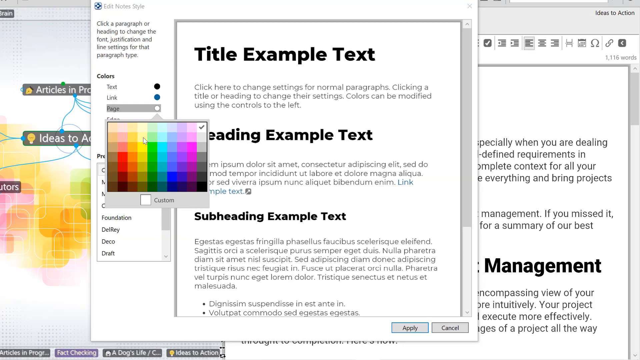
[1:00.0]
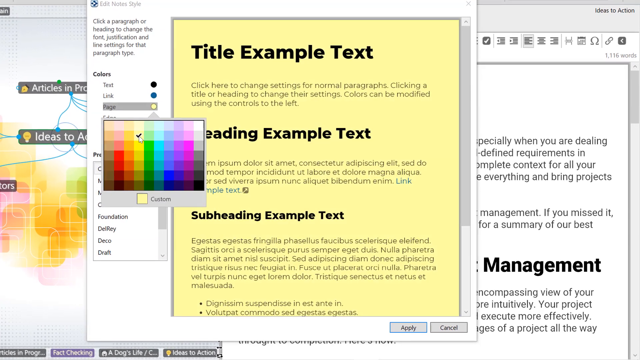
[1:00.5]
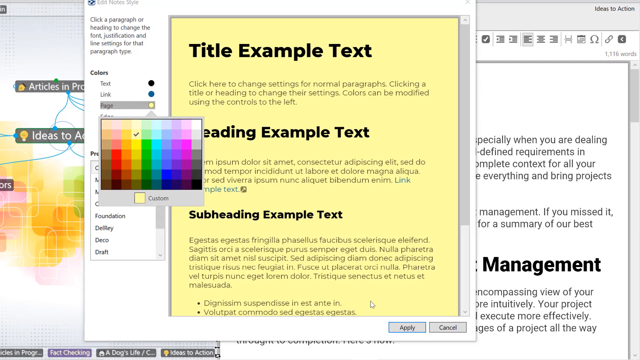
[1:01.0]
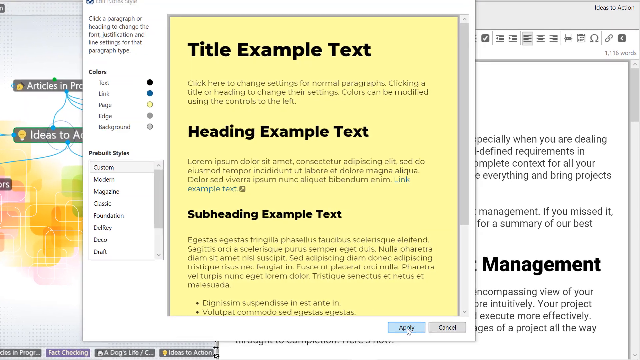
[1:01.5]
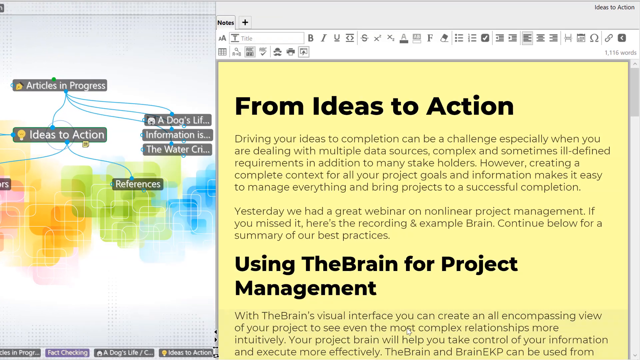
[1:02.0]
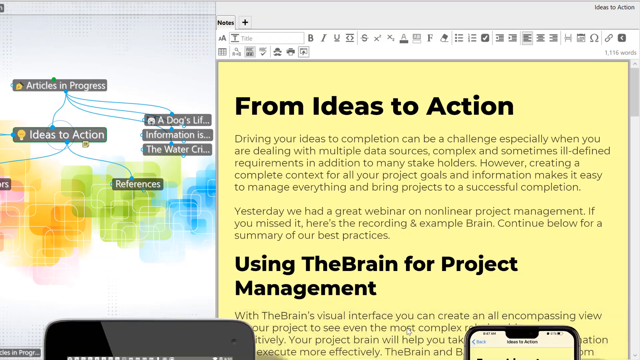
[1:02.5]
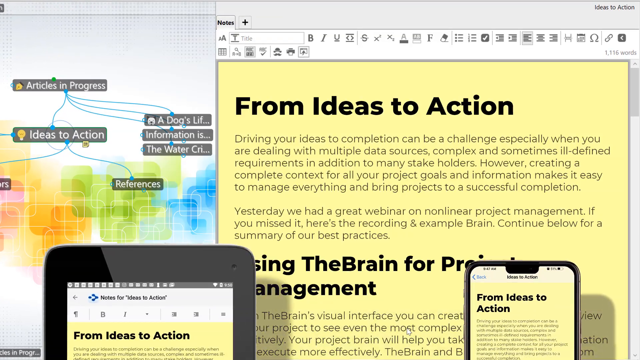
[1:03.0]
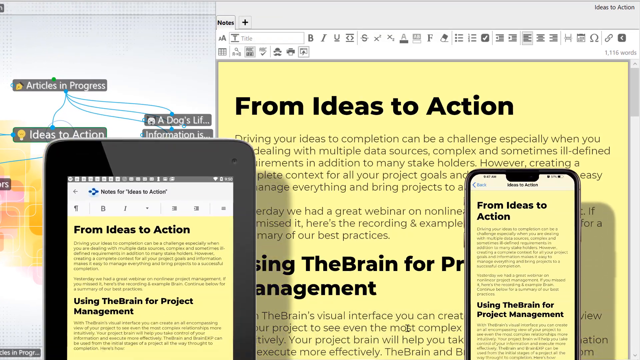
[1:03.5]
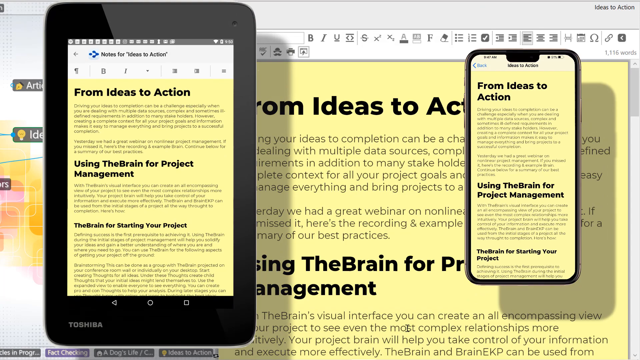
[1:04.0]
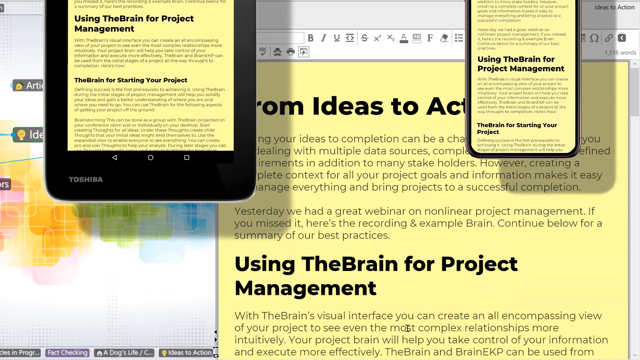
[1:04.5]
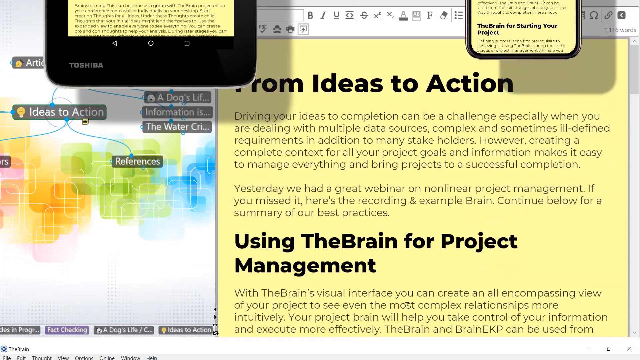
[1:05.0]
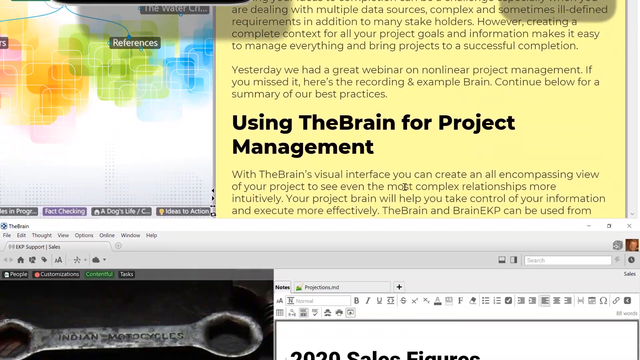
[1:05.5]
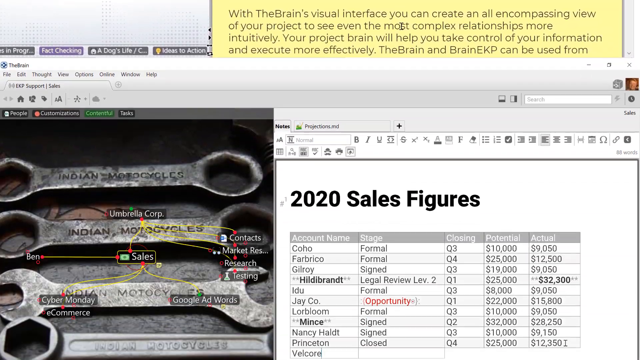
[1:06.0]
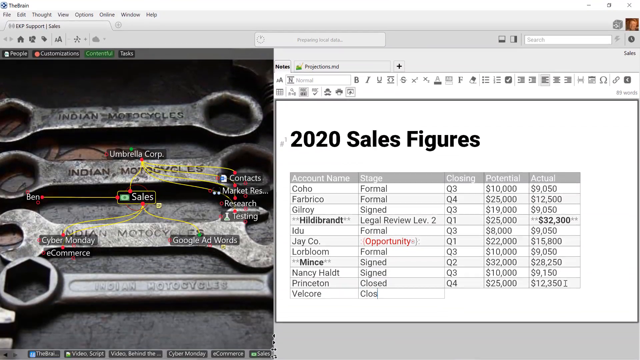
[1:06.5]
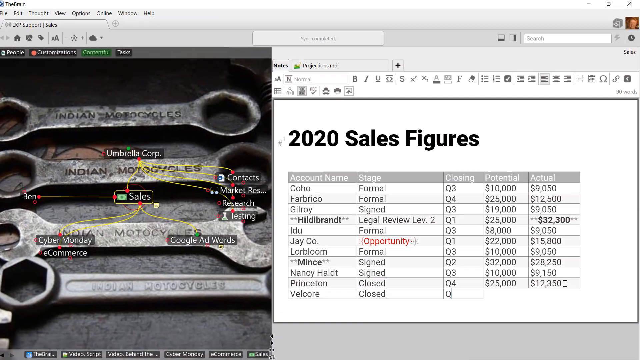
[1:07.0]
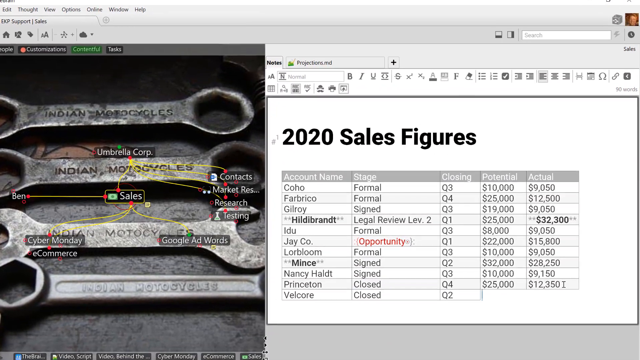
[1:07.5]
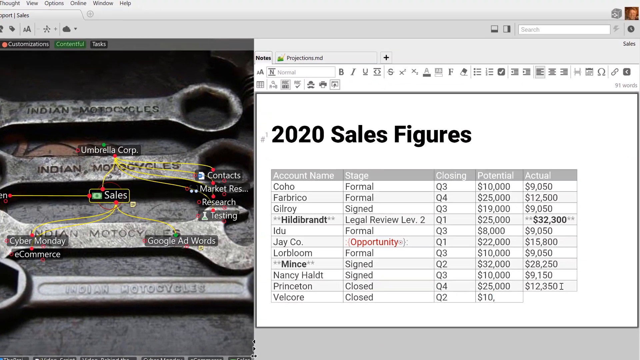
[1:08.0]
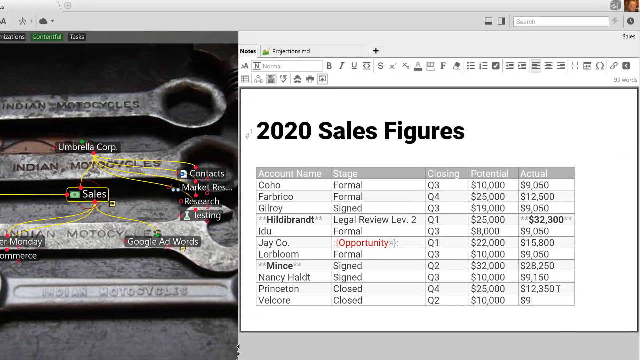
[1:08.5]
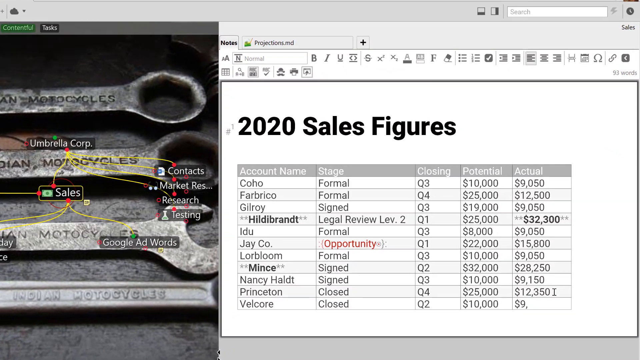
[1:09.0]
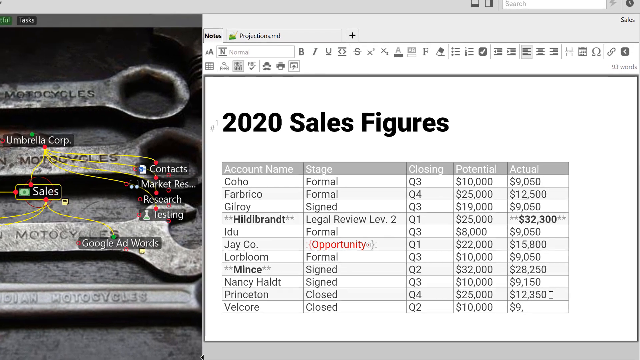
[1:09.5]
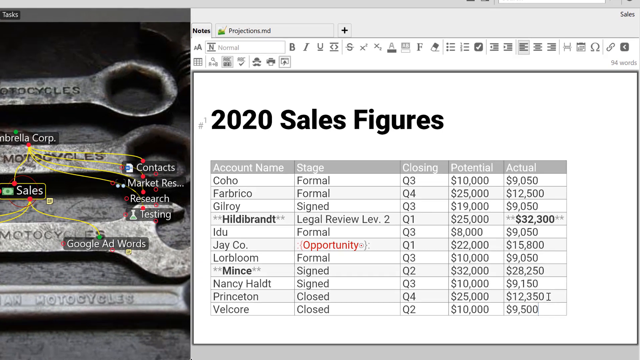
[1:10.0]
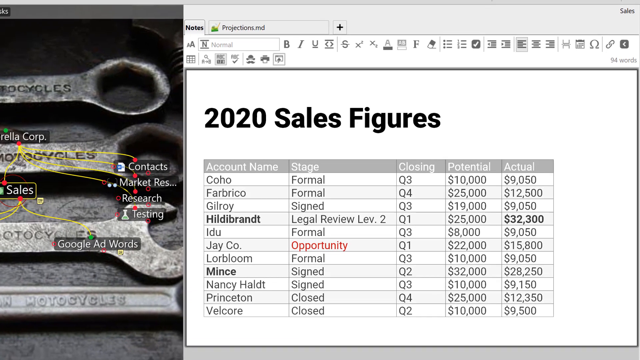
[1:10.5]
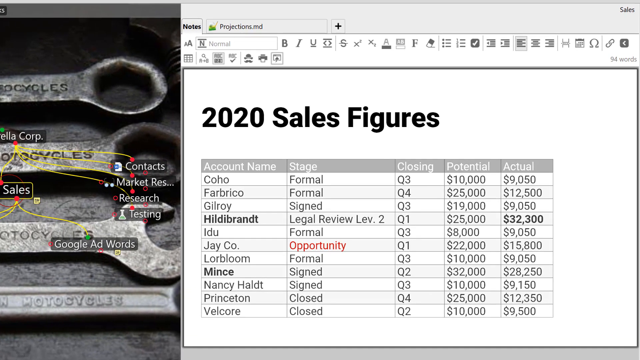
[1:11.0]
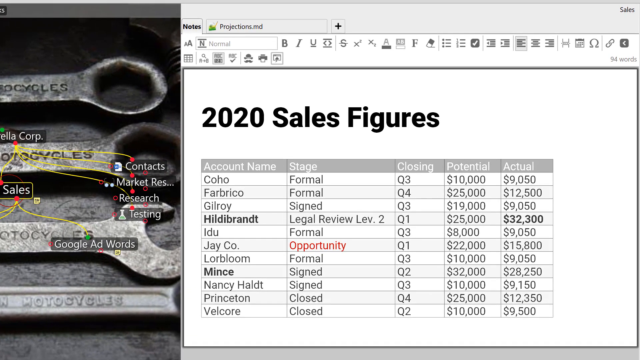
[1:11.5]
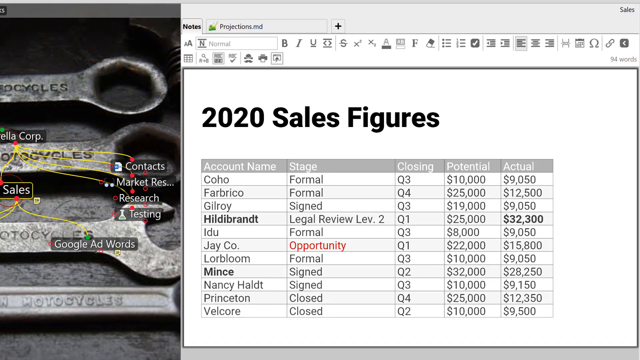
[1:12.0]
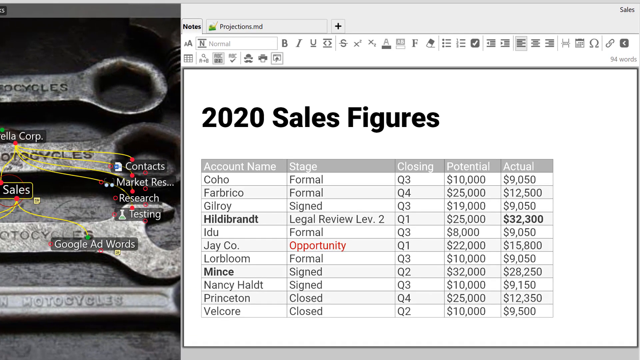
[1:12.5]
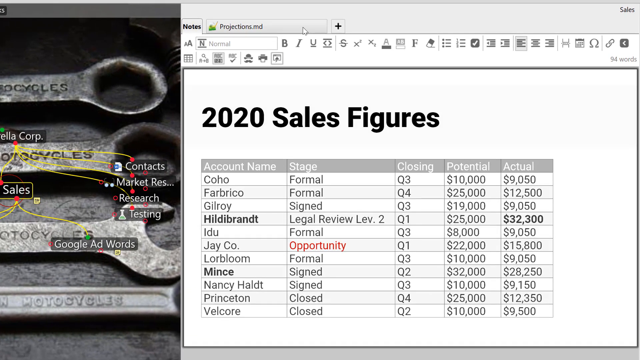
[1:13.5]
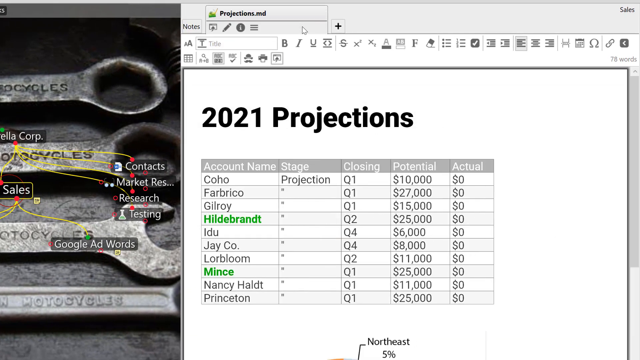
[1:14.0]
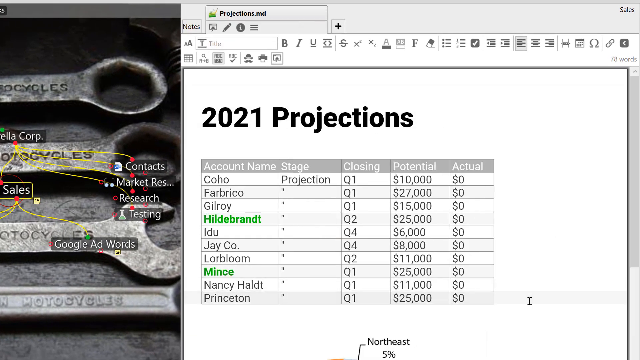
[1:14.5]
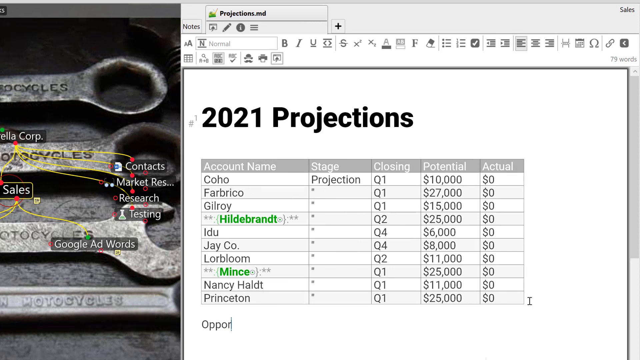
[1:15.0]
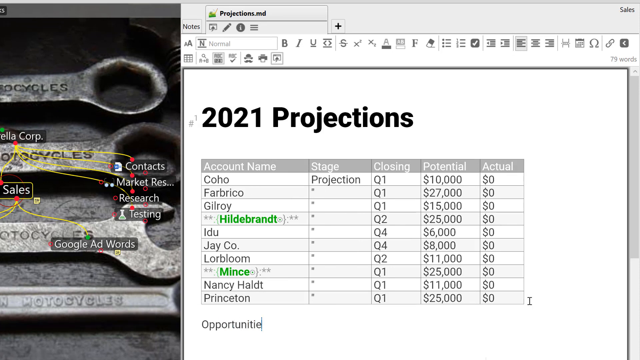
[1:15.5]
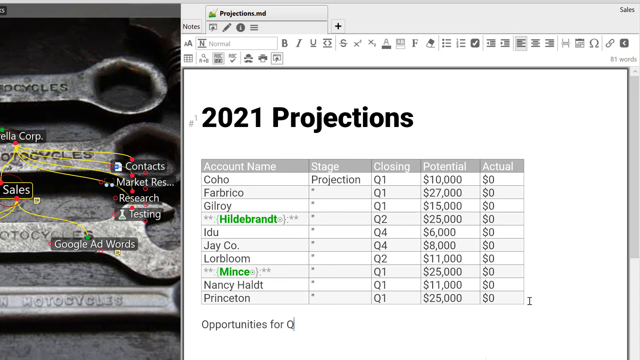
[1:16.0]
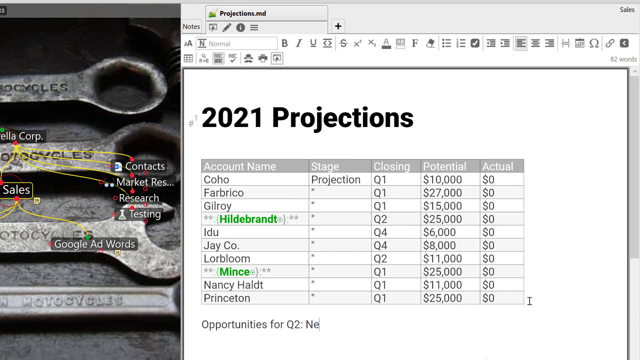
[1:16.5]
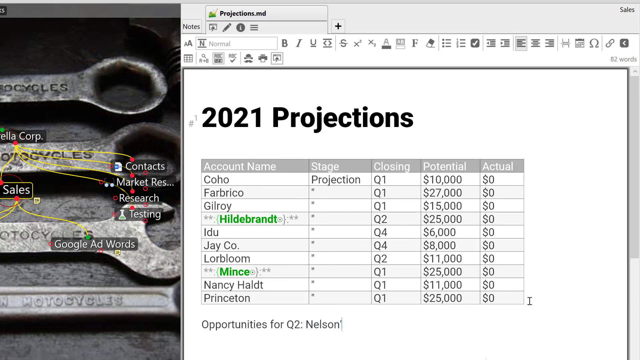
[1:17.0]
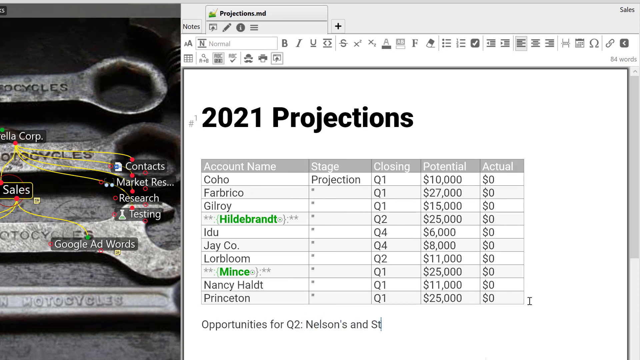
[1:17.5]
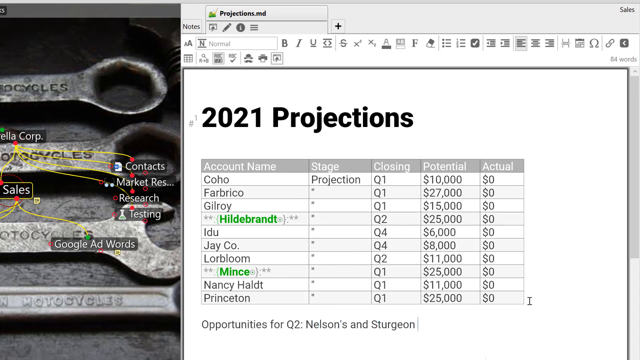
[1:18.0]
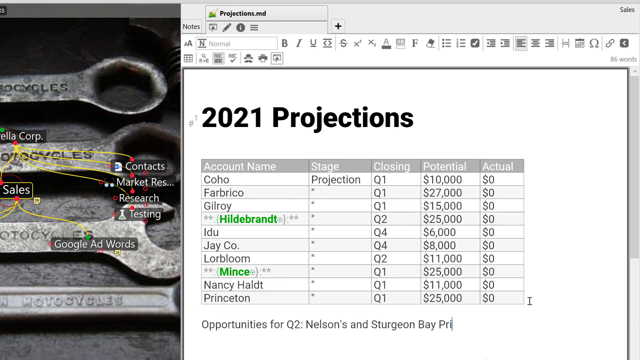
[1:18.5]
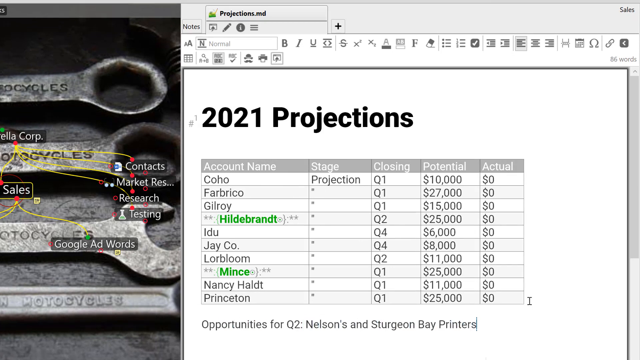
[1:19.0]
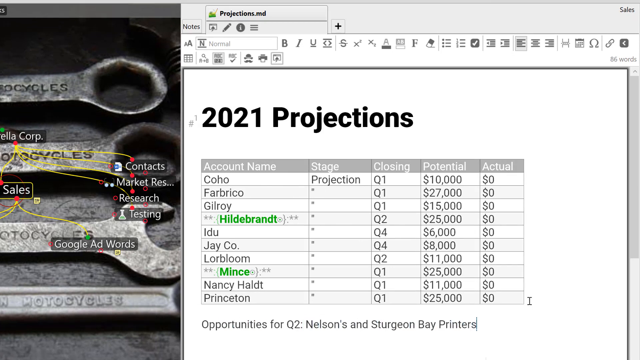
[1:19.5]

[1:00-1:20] The user goes to colors in a pop-up box at the top that says something about editing and adding the style, with "click a paragraph for heading" and some text underneath it. Different colors can be selected for "color for text", "color for link" and "page", which is the one currently selected. A banana cream color is chosen, and the background turns banana cream. Bold text reads "title example text" with a description underneath, and the same is shown for a heading example and a subheading. The cursor is at the bottom on "apply", which is in blue; when it is clicked, it turns yellow. A smartphone and a tablet then come up from the bottom showing the exact same thing being done on the computer, with the smartphone on the right and the tablet on the left. These go away, the view scrolls down, and another table titled "2020 sales figures" appears, with columns for "account name", "stage", "closing", "potential" and "actual". It lists different names; the majority are "formal" and some are "signed" or "closed", along with quarters and potential versus actual money. Zoomed in, 9500 is typed into the actual field for "velcore". On the left is a series of tools, almost like the background, with something cut off that looks like "vela corp" and a red dot underneath with yellow lines going to different spots. The user clicks on another tab, "2021 projections", and types underneath the table "opportunities for q2", "Nelson's" and "Sturgeon Bay printers".